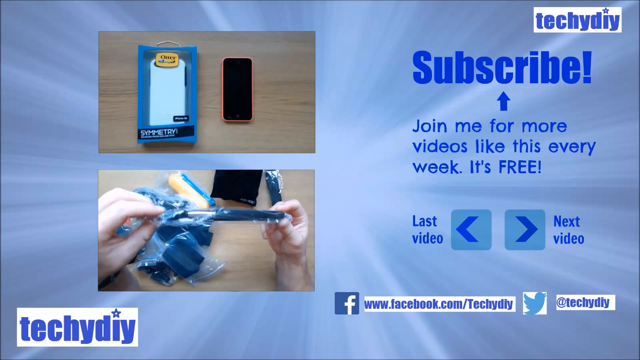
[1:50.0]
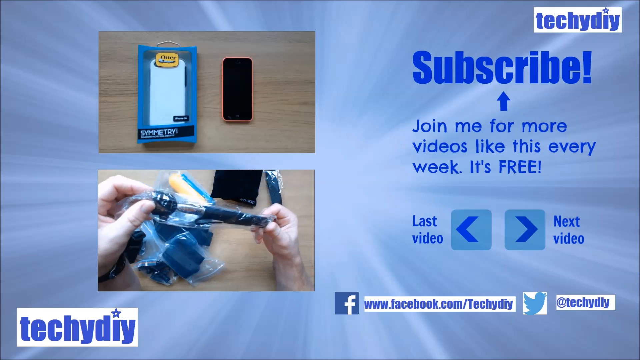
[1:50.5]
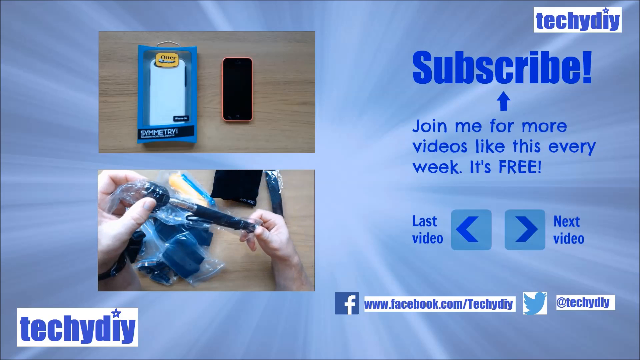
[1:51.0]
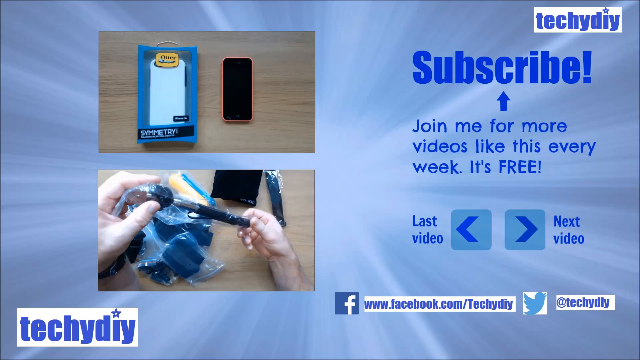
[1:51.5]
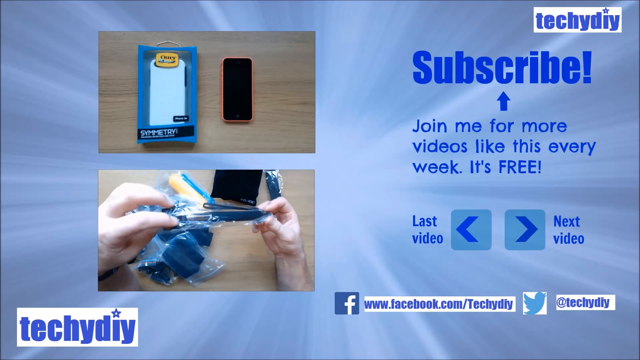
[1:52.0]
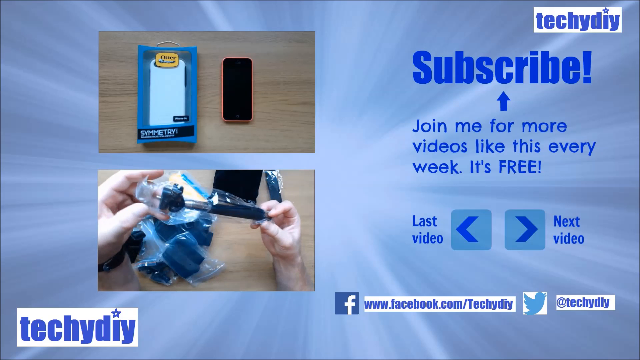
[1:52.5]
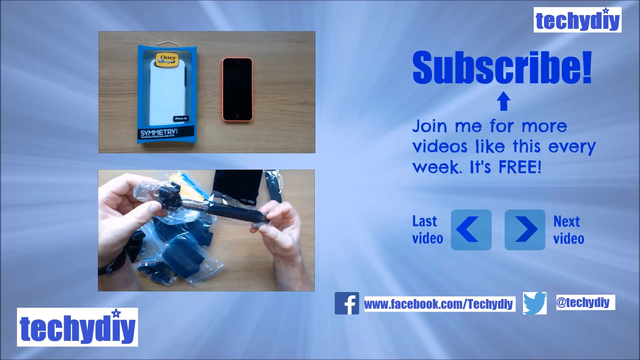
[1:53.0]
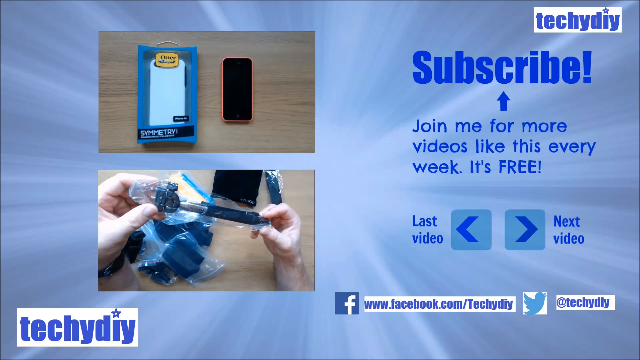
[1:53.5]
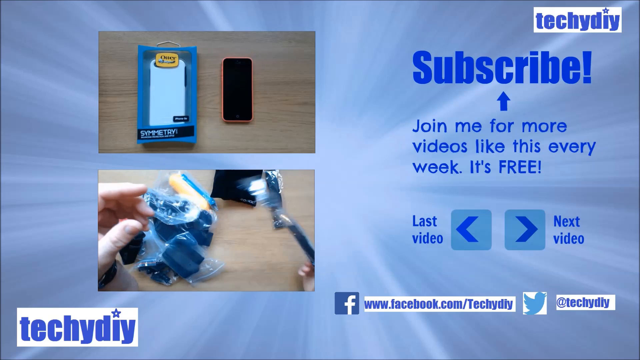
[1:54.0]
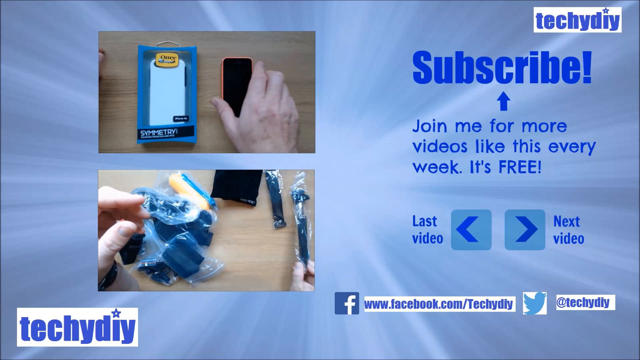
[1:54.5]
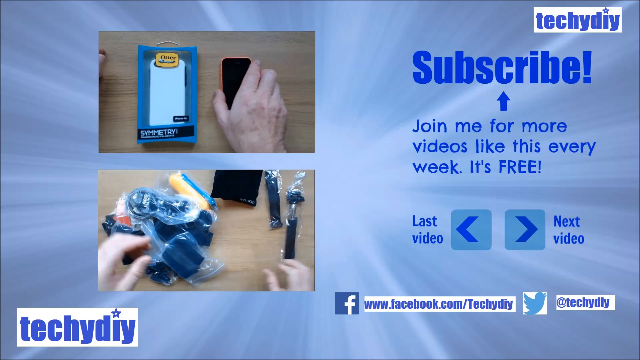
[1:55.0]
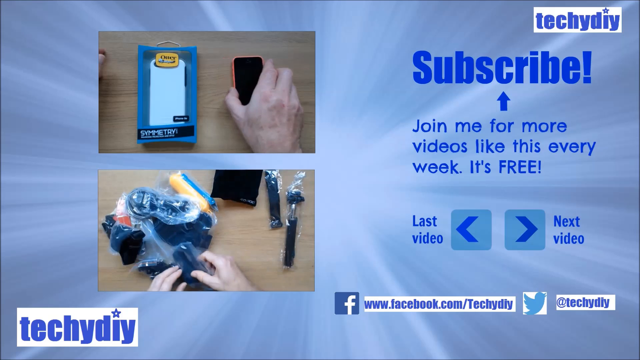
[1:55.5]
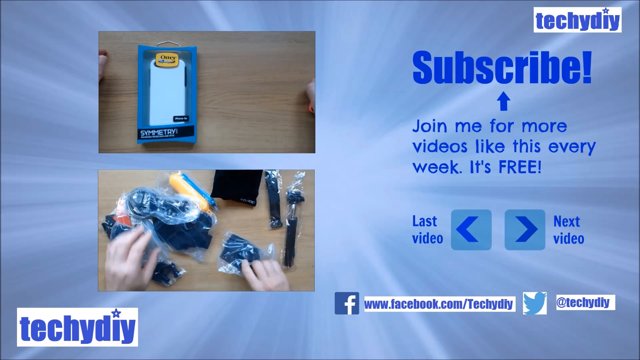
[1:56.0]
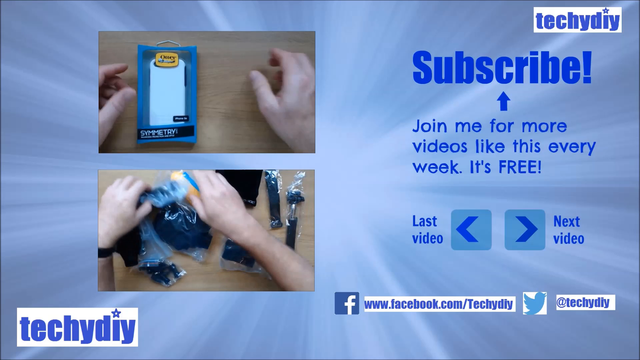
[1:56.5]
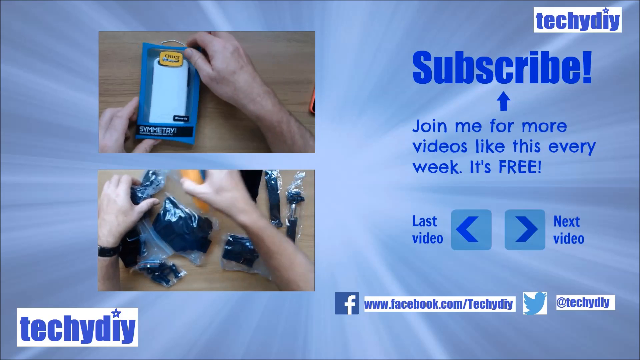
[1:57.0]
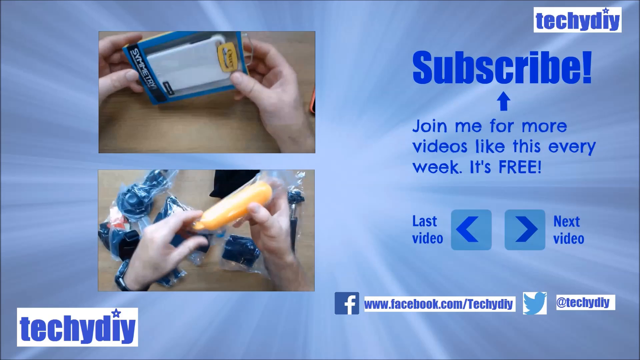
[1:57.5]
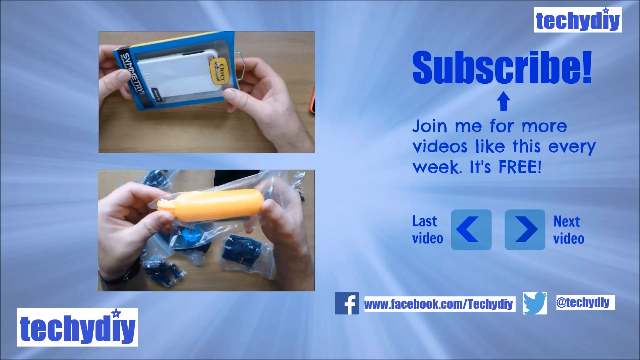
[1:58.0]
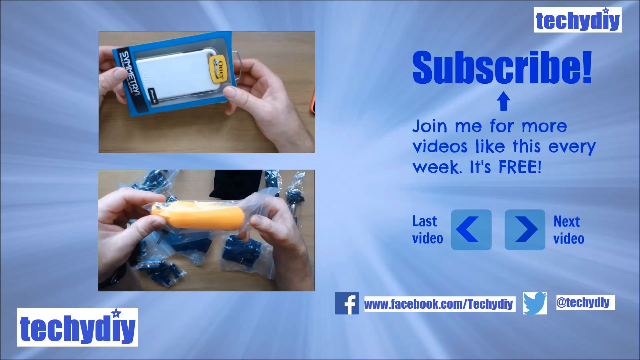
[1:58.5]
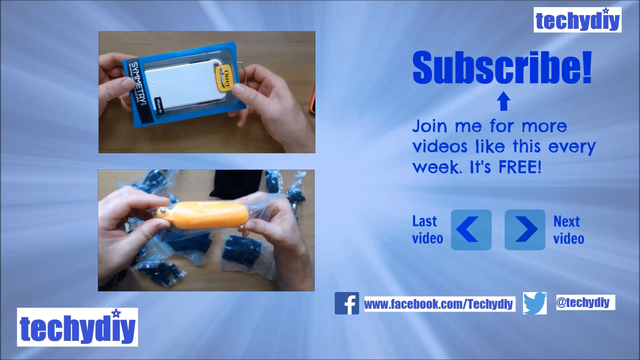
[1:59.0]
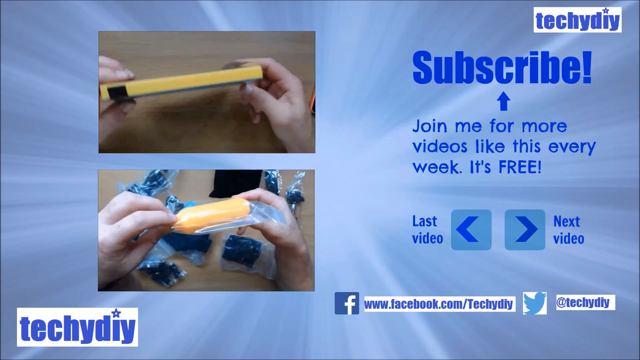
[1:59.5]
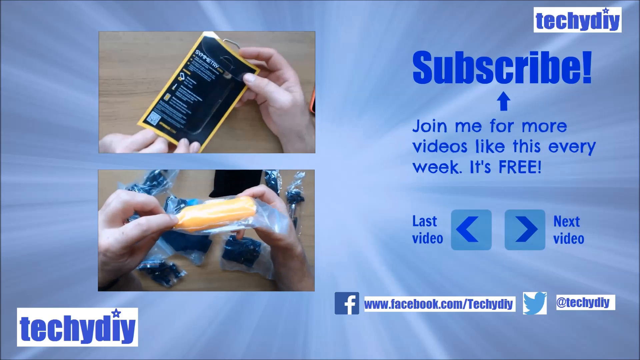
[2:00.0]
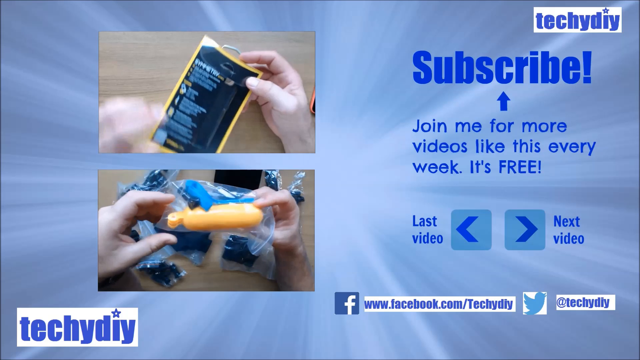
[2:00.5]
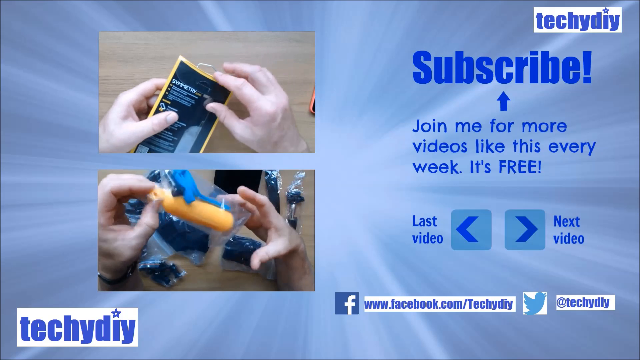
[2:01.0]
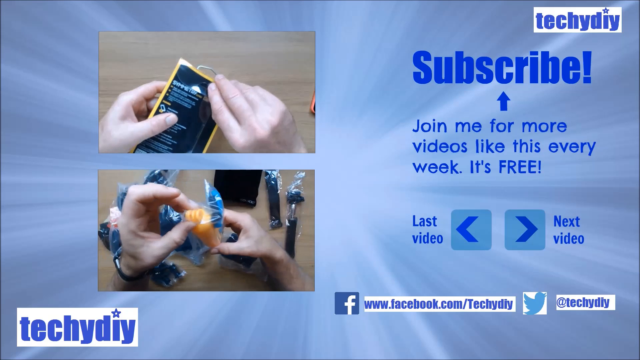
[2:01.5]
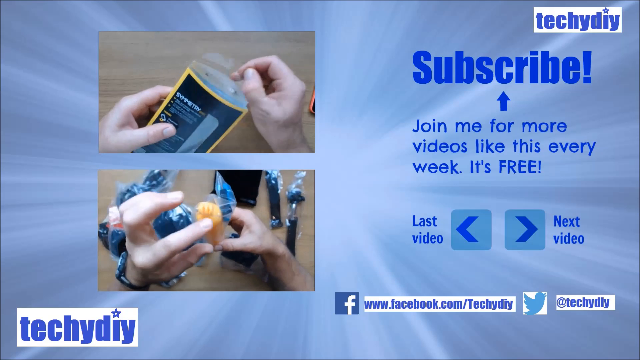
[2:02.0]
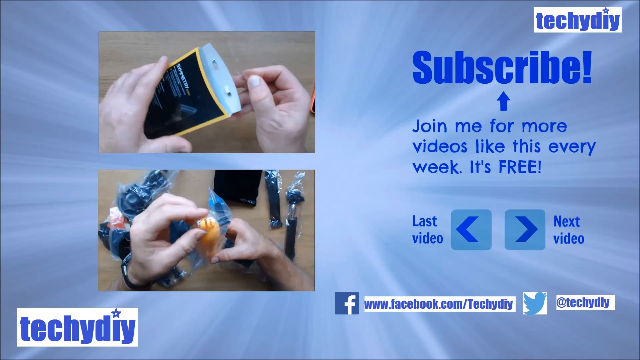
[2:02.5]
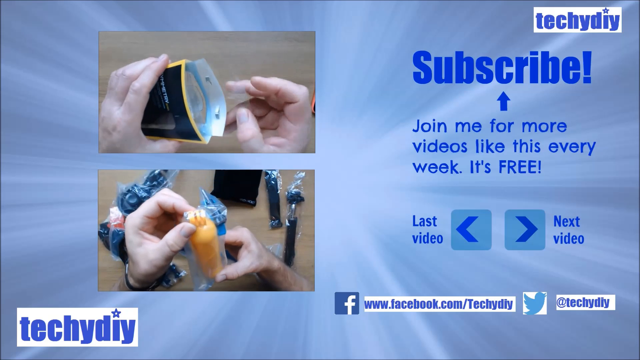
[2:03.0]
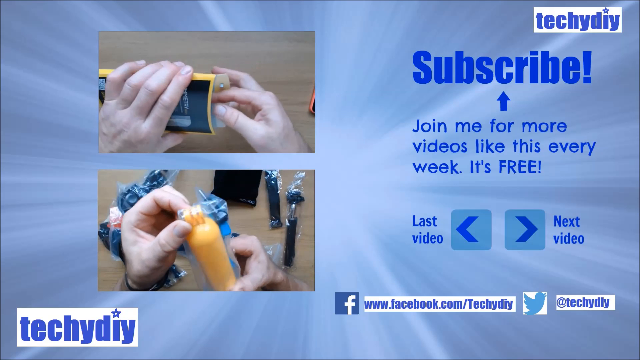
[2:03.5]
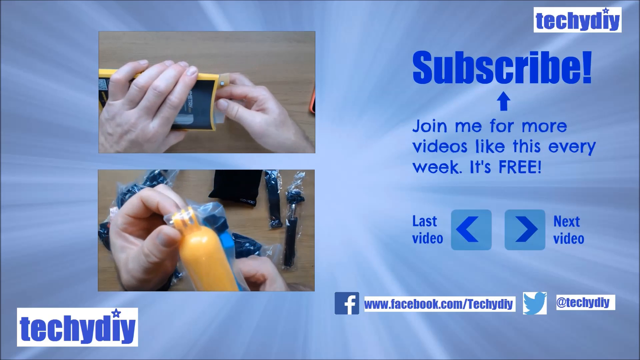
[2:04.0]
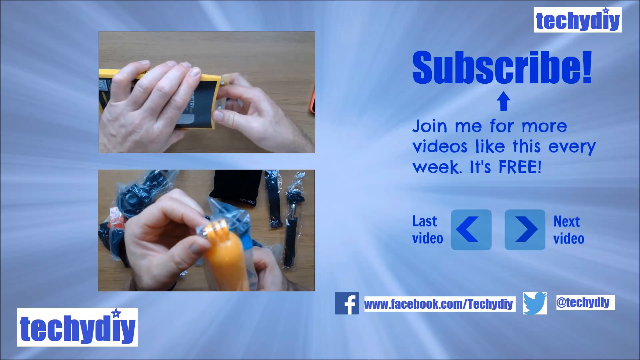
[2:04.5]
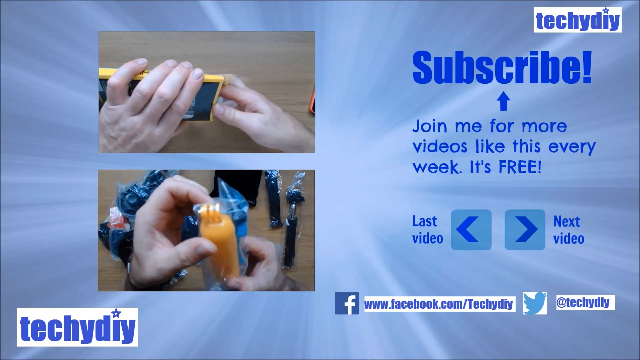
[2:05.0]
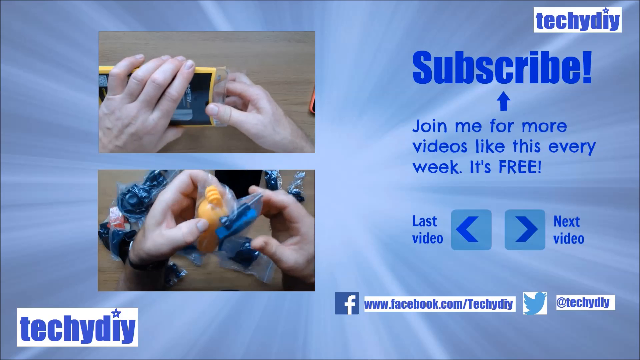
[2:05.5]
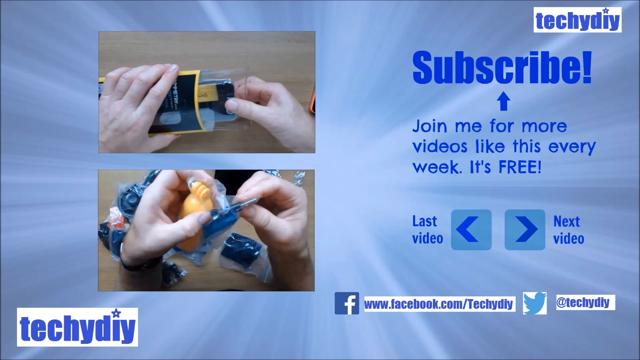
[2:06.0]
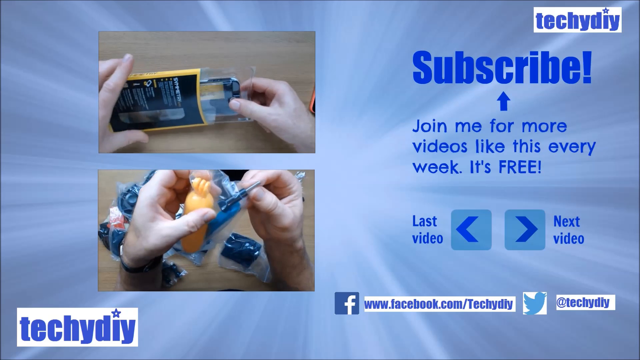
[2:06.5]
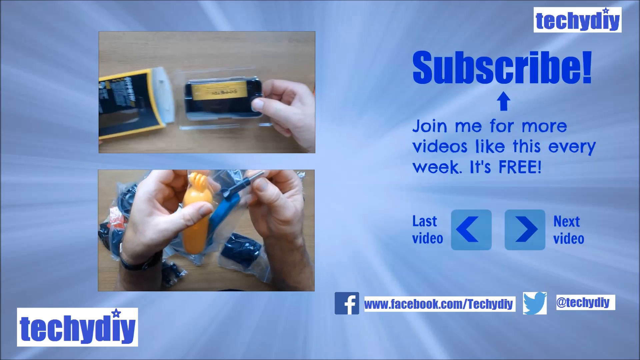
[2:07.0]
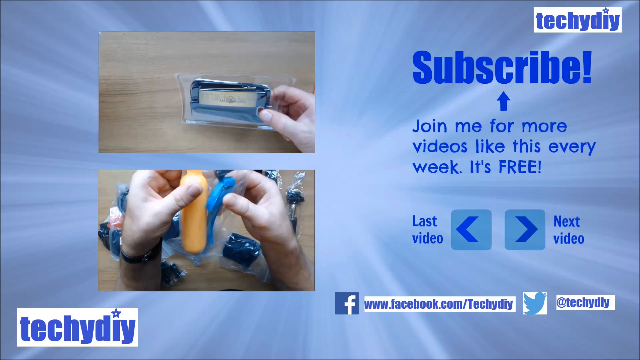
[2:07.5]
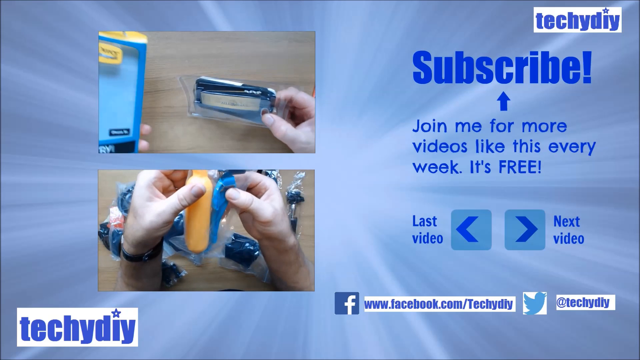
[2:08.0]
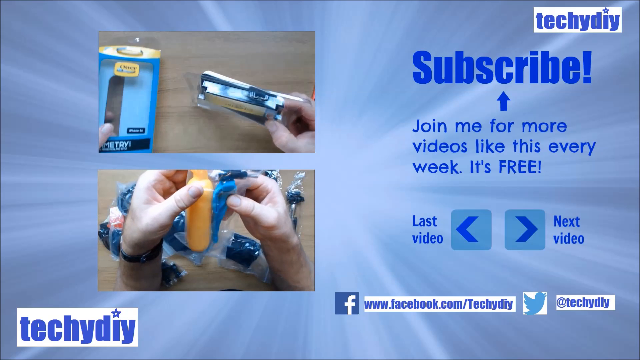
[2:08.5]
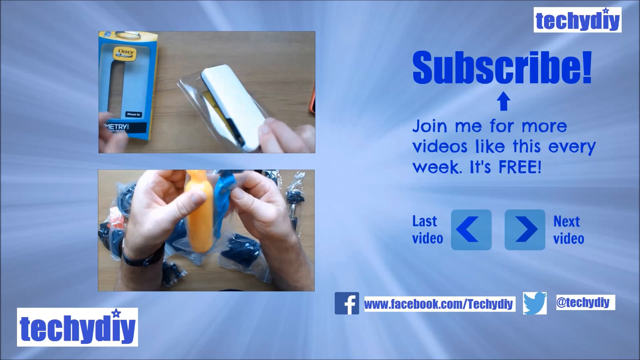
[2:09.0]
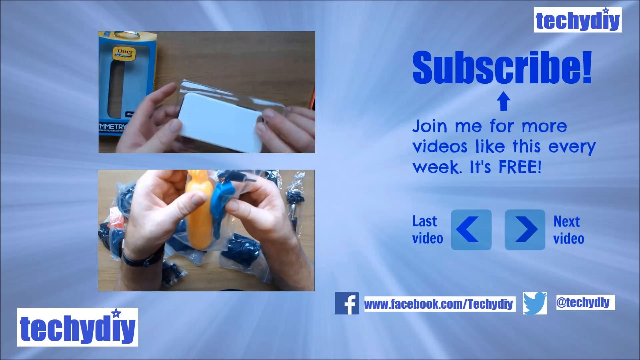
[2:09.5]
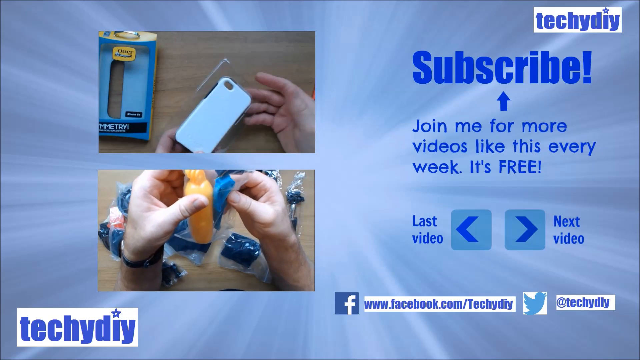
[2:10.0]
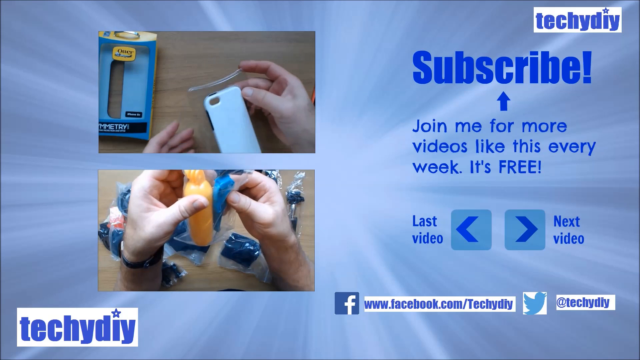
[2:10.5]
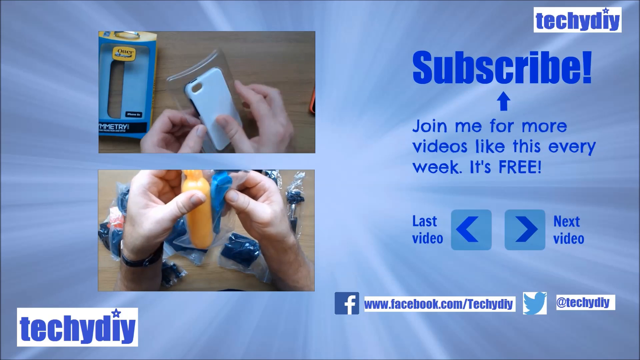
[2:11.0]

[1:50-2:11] A blue screen shows rays of light coming out of the centre, as at the start. The TechieDIY logo appears in the bottom left, bottom right and top right. Two small videos are on the screen. One shows a mobile phone in an orange casing on a table, next to what appears to be a white mobile phone case in a packet. The one below seems to show various technological objects in separate plastic packaging. As they play, a pair of hands opens the packets, takes out the phone case and shows the things inside the plastic bags. There is an option to subscribe with an arrow pointing to it, and below it reads "join me for more videos like this every week. It's FREE!" with free in capital letters. Arrows point backwards and forwards, one saying "last video" and one saying "next video", and there are links to the Facebook page and the Twitter page.